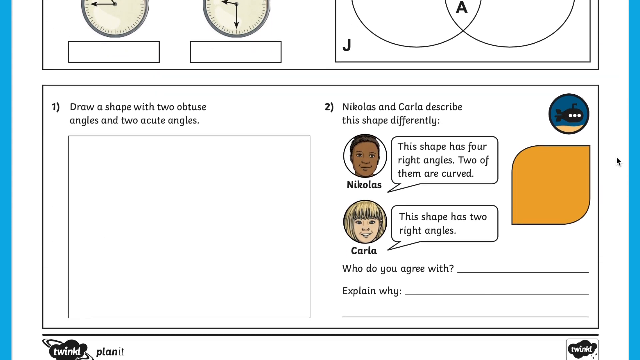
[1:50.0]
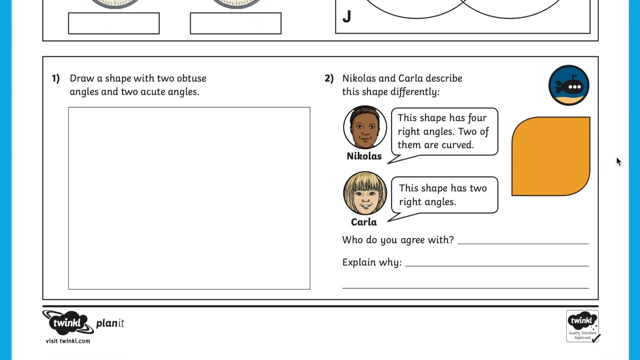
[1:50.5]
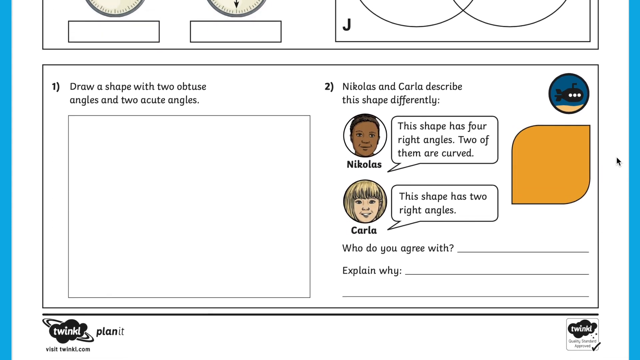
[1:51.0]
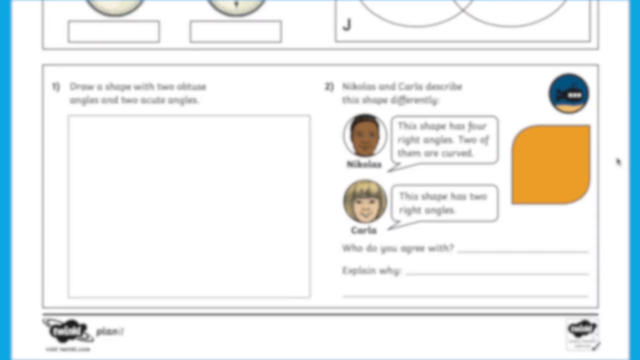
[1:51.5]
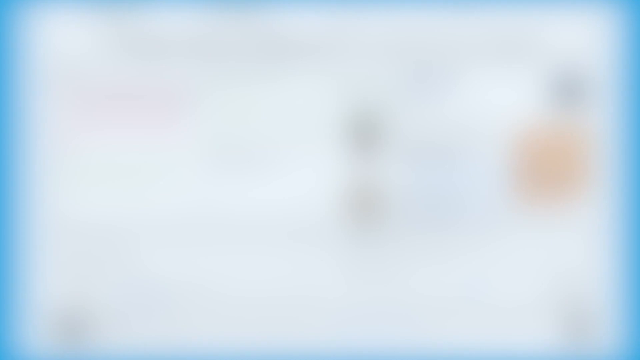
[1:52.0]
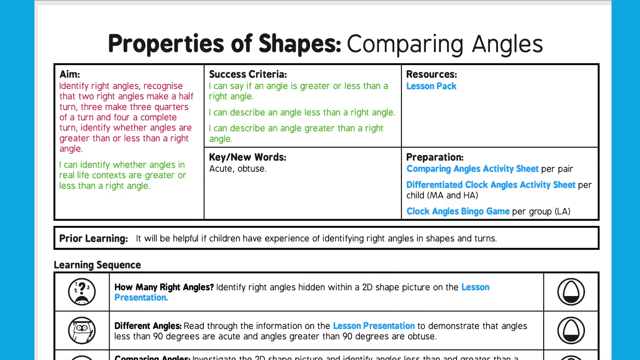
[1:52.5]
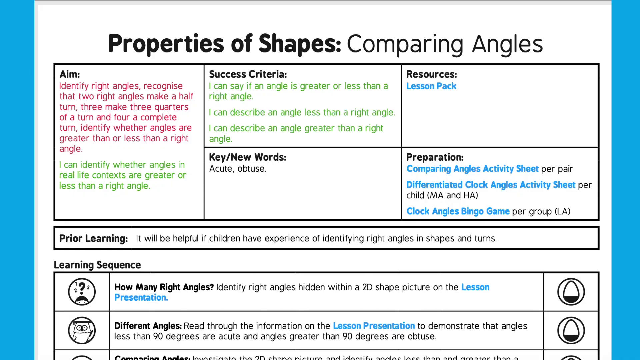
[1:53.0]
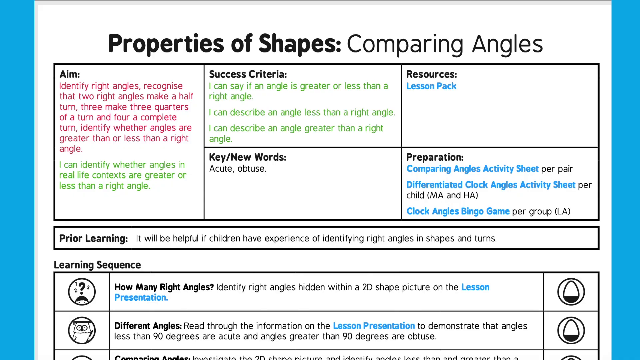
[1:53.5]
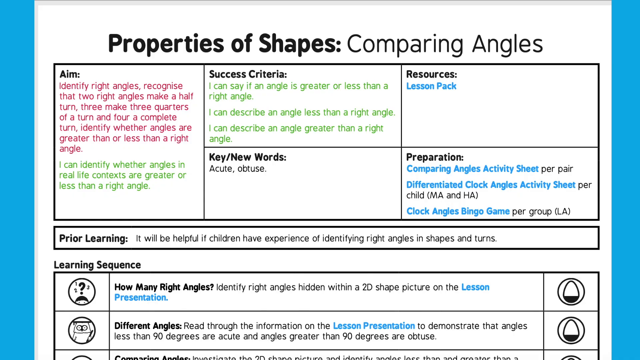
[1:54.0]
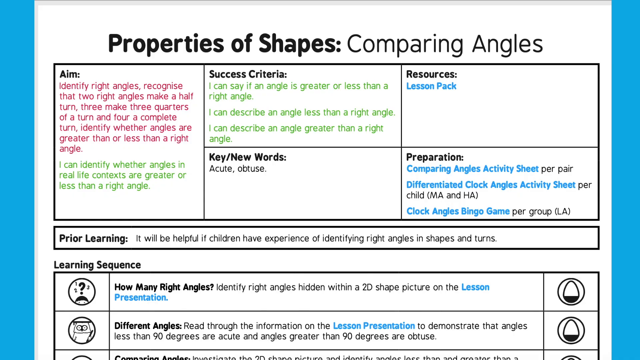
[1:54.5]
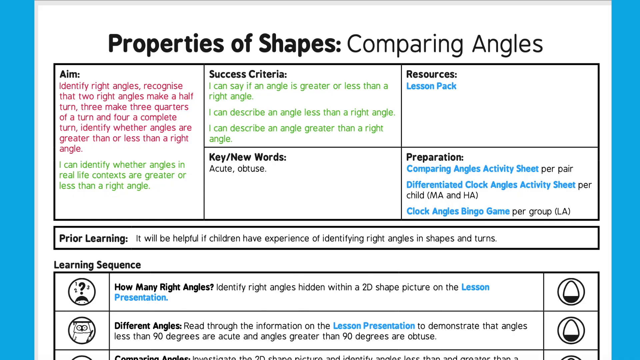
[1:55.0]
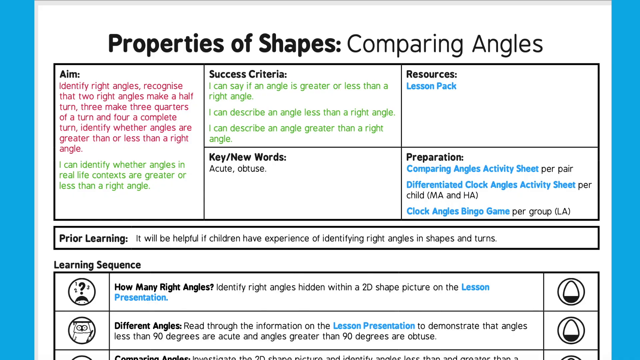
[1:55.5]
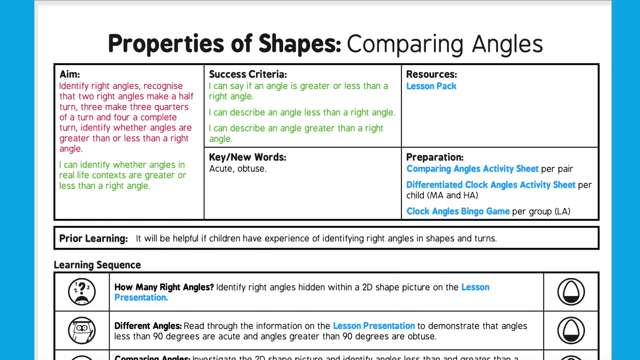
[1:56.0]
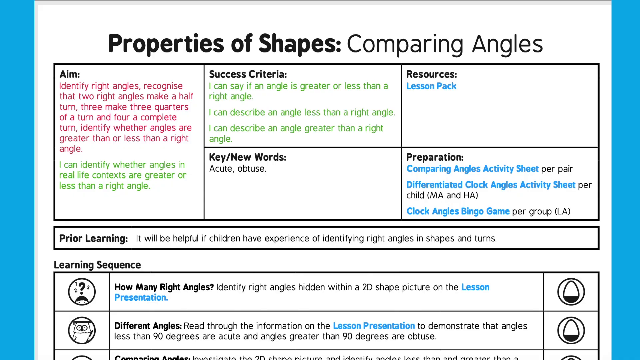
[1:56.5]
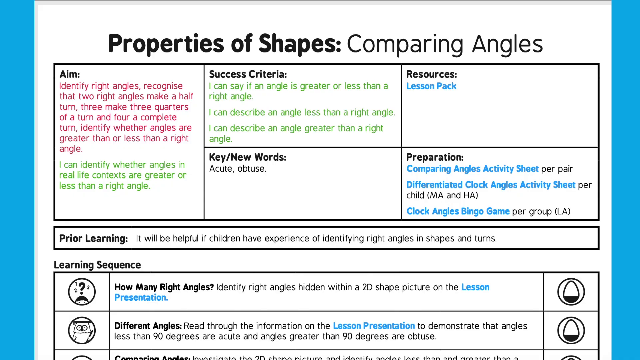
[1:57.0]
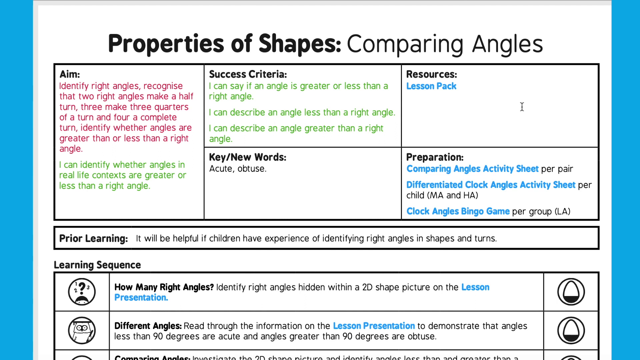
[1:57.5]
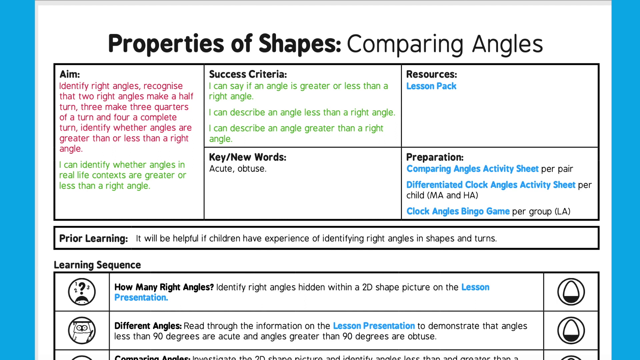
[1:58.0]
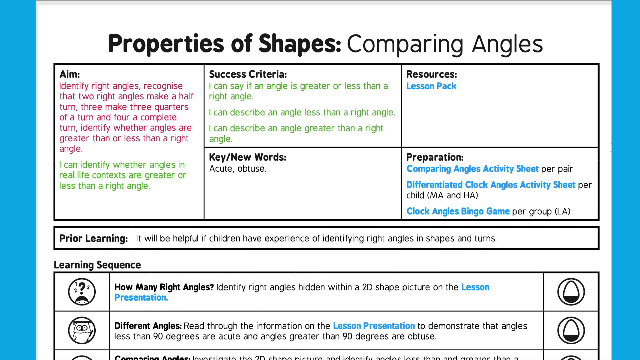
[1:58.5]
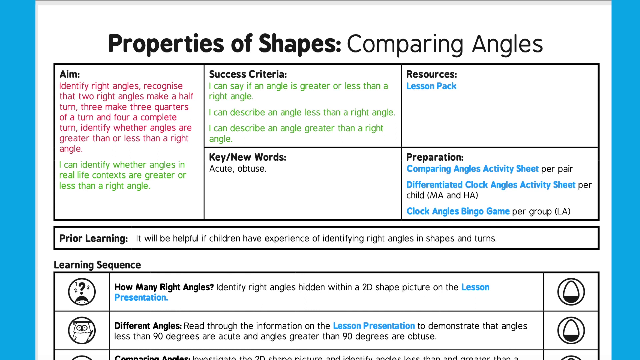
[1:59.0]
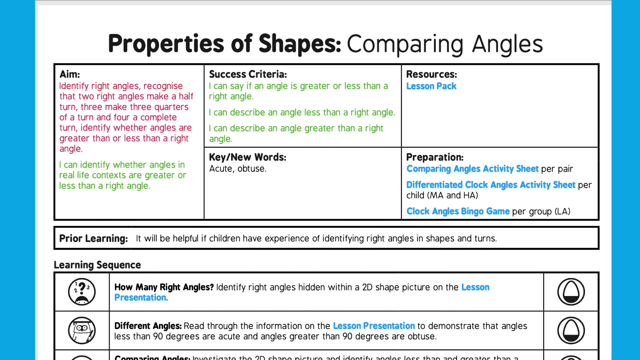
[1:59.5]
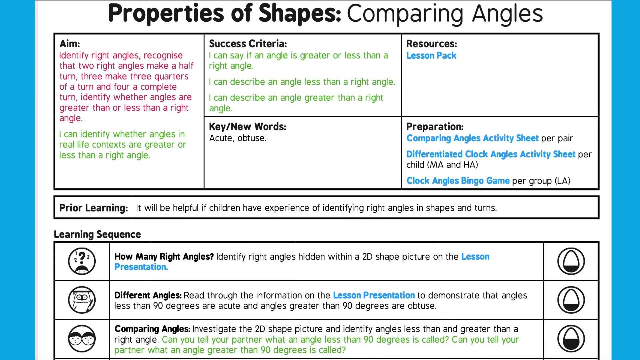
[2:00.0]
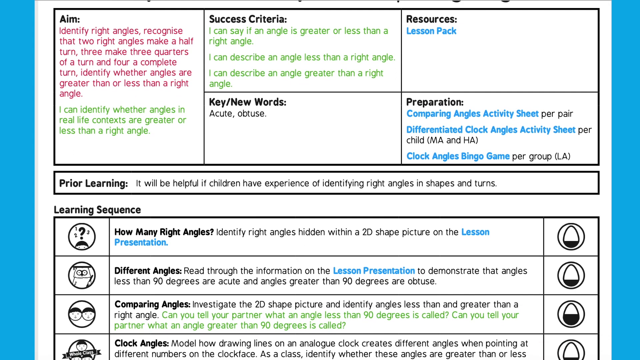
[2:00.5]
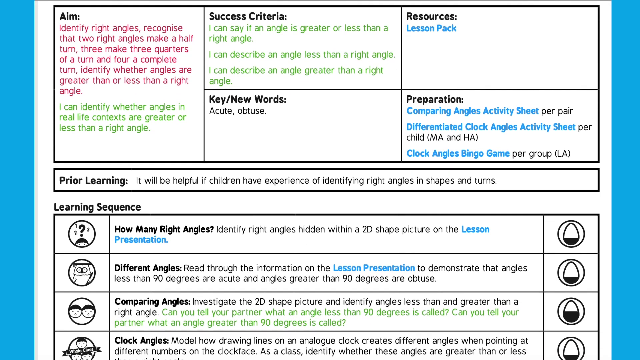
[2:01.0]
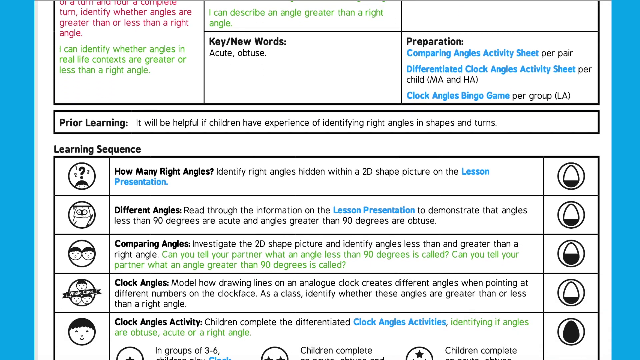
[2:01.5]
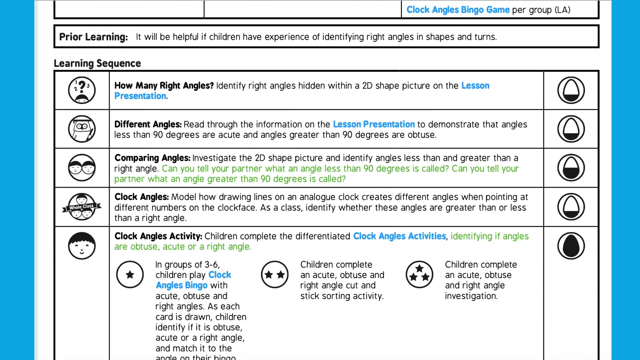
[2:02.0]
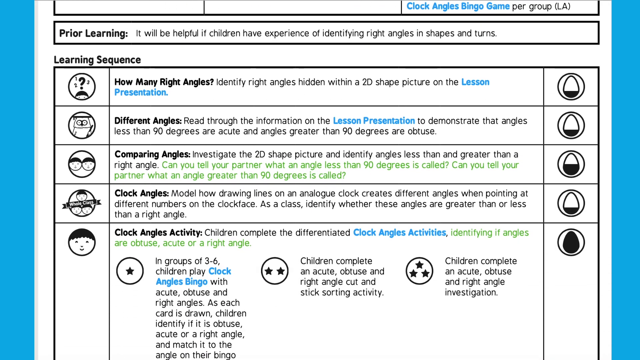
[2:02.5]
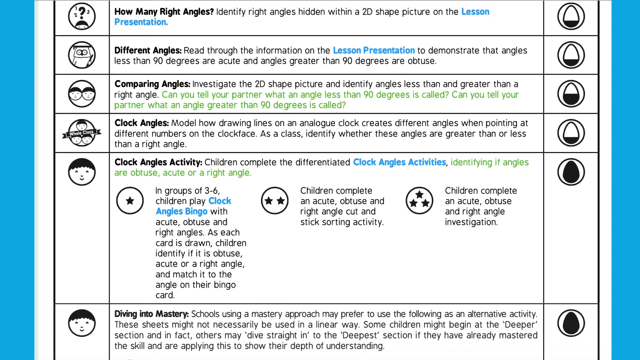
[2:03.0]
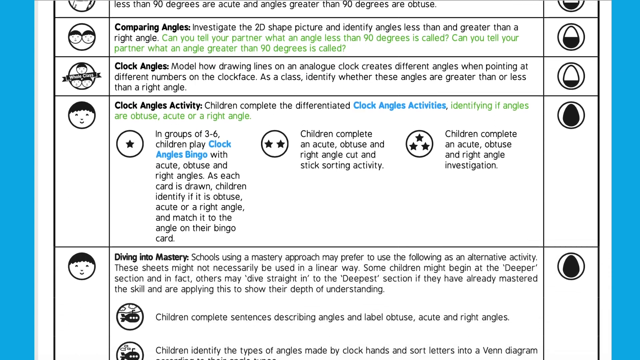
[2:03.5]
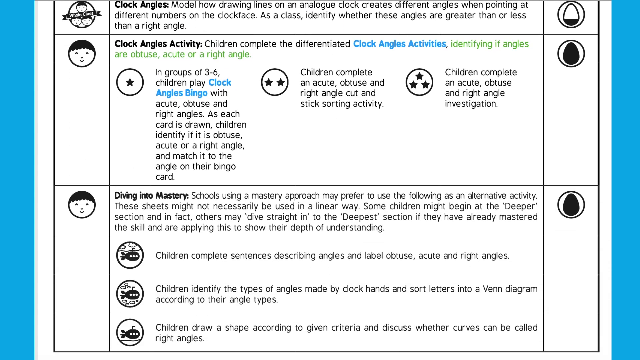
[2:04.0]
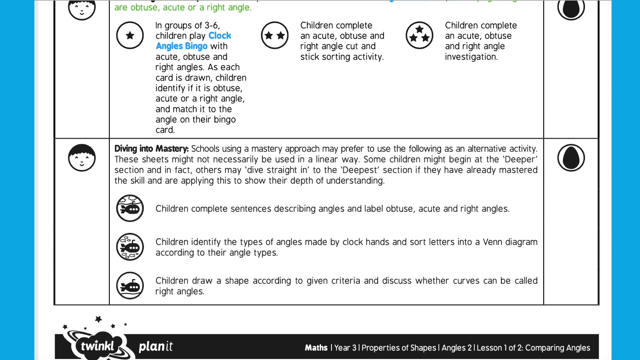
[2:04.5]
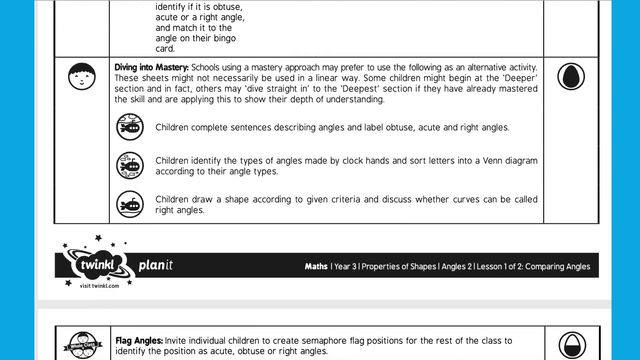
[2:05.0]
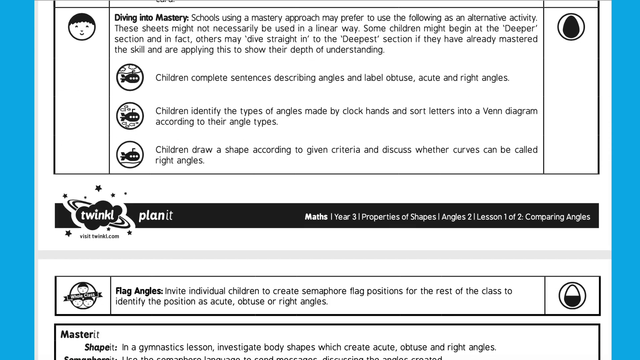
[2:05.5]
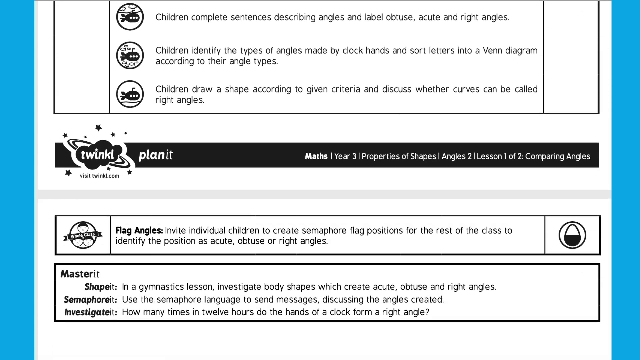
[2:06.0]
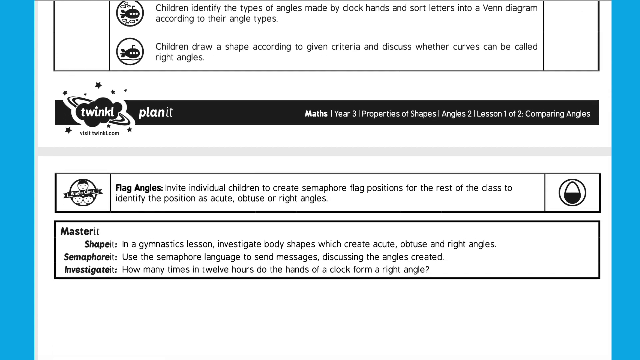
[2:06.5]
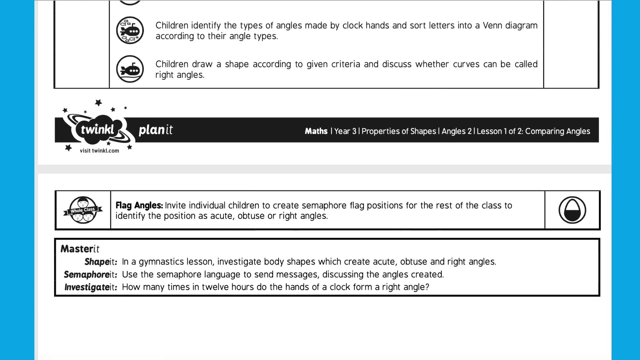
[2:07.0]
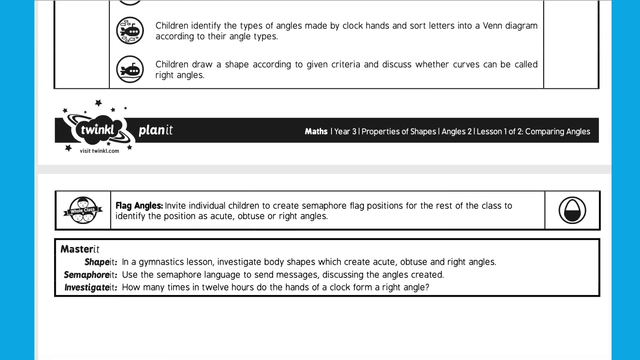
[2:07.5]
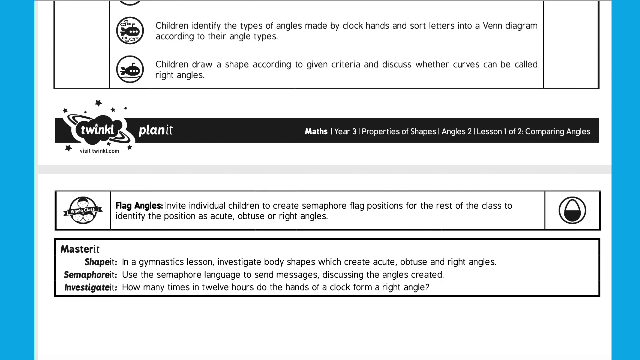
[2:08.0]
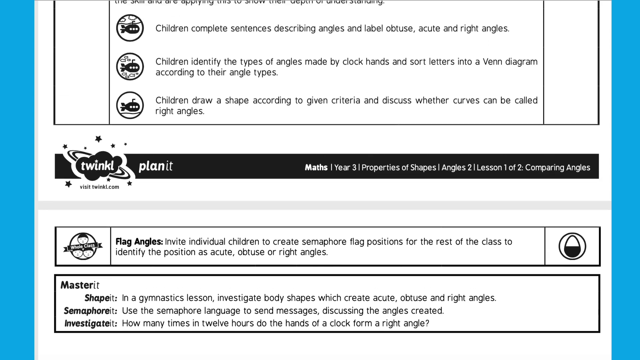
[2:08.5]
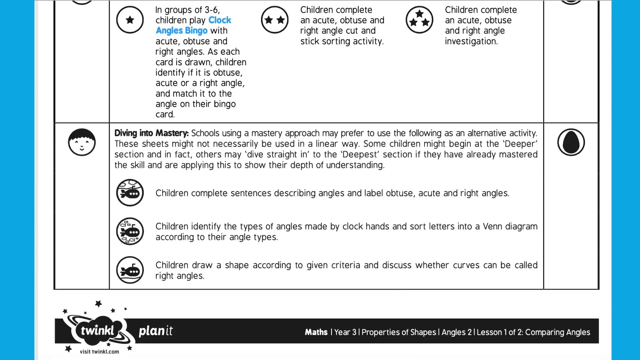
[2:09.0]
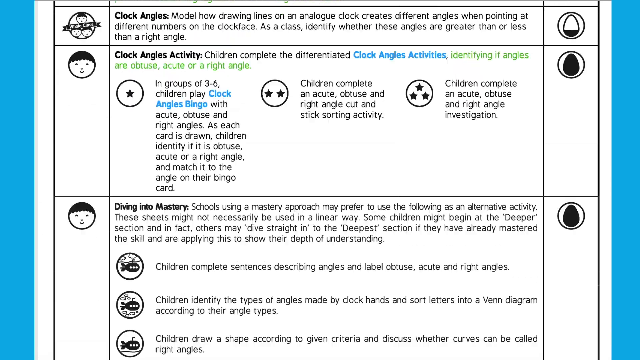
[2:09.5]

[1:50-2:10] A page on properties of shapes, comparing angles, lists aims written in yellow, pink and green: identifying right angles, recognising that two right angles make a half turn, three make three quarters of a turn, and four a complete turn, and identifying whether angles are greater than or less than a right angle, including "I can identify whether the angles in the real life context are greater than or less than a right angle." Success criteria follow: "I can see if an angle is greater or less than a right angle", "I can describe an angle less than a right angle", "I can describe an angle greater than a right angle". Resources and preparation are listed: comparing angles activity sheets per pair, differentiated clock angles activity sheets per child, and clocks. A lesson sequence follows, covering identifying right angles in shapes, different angles, and comparing shapes and sizes.